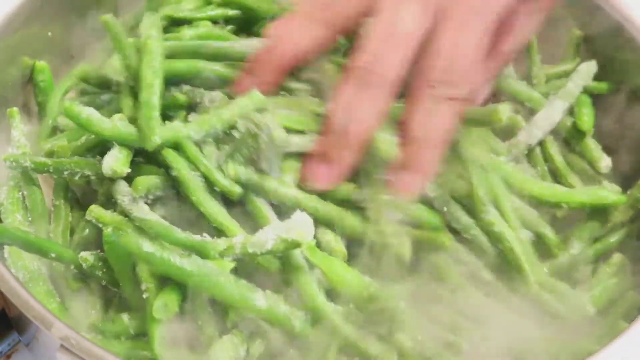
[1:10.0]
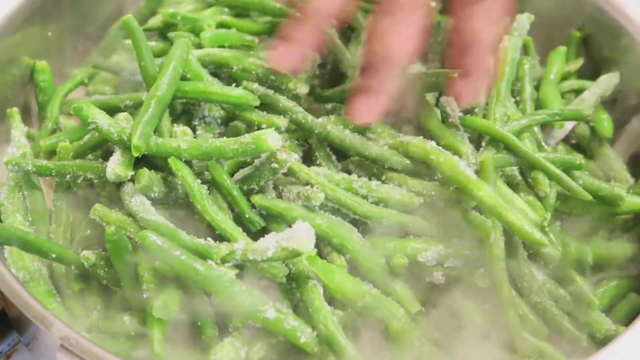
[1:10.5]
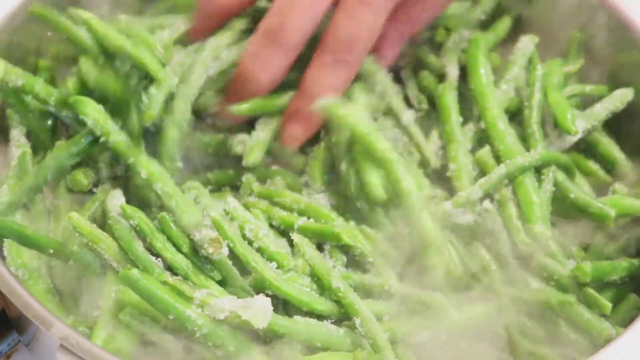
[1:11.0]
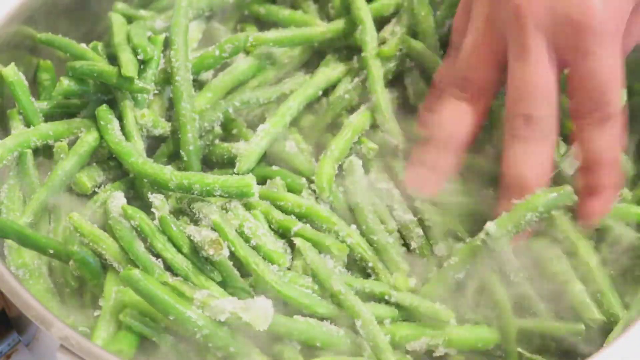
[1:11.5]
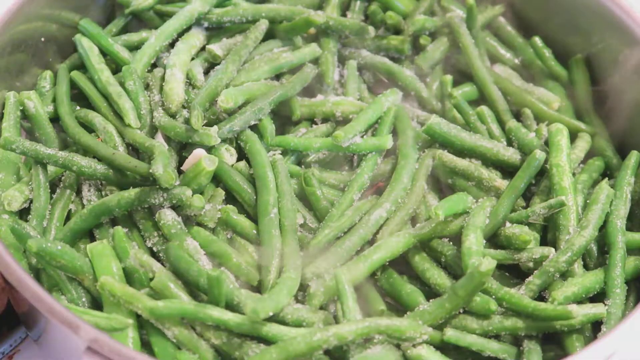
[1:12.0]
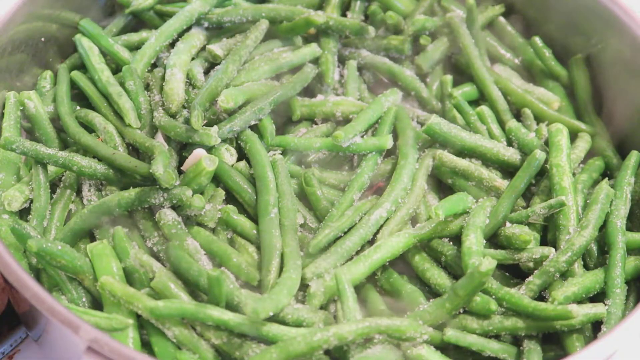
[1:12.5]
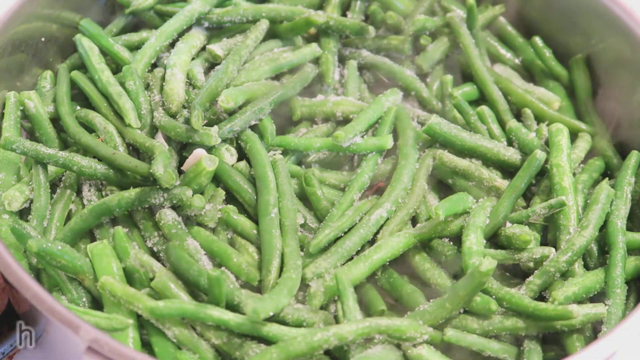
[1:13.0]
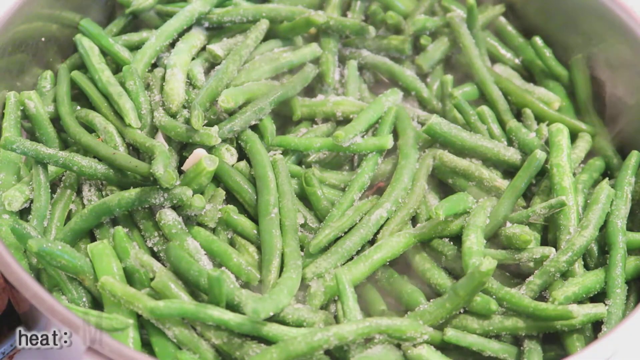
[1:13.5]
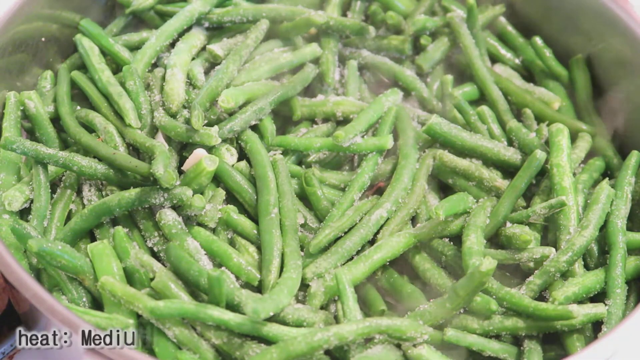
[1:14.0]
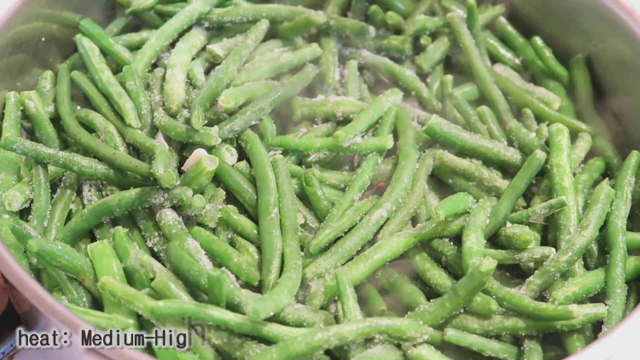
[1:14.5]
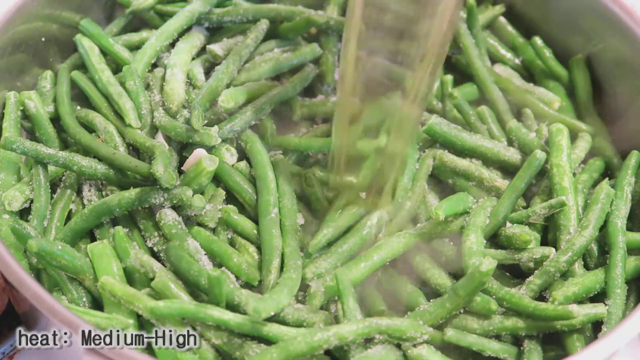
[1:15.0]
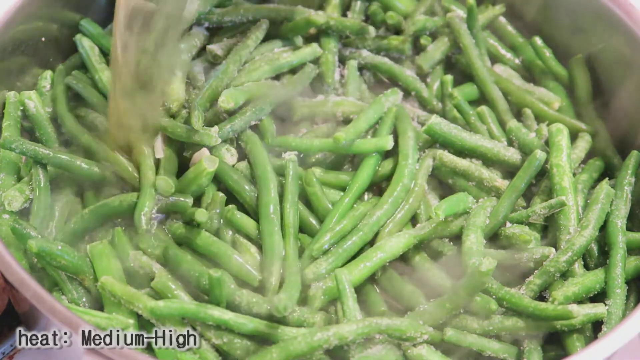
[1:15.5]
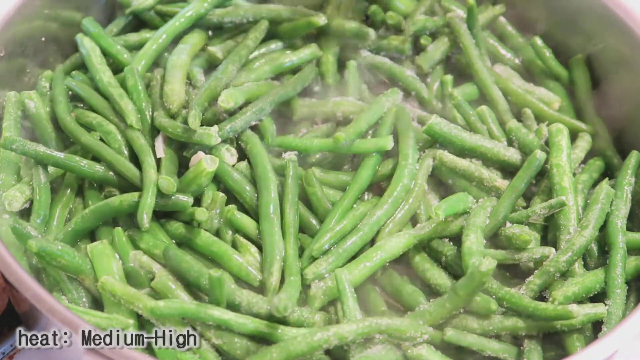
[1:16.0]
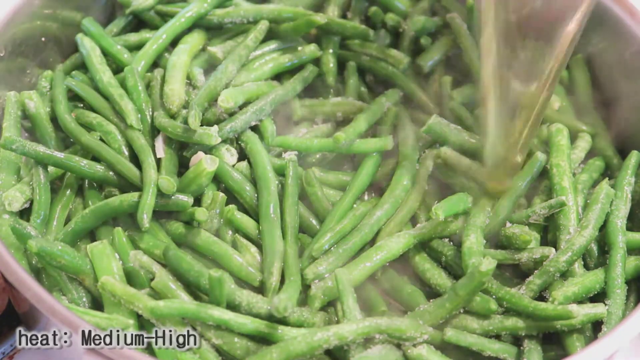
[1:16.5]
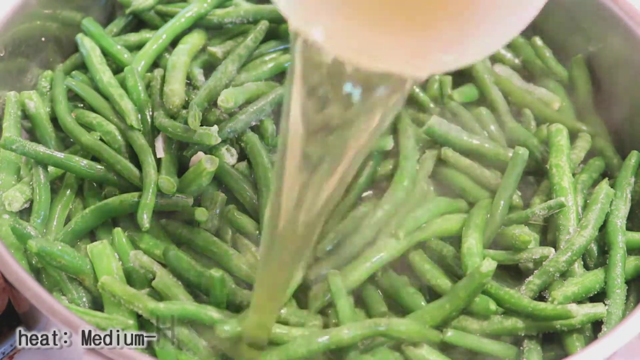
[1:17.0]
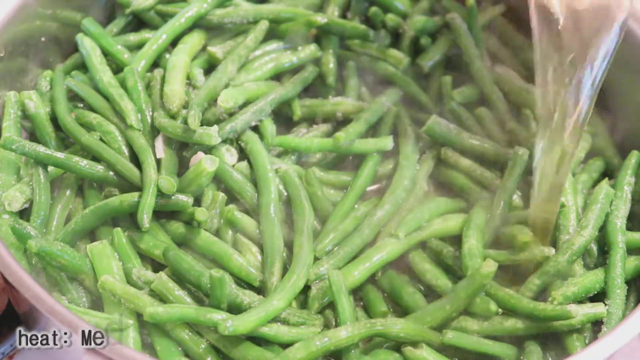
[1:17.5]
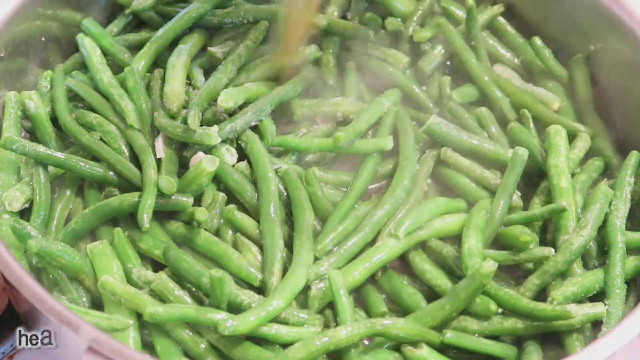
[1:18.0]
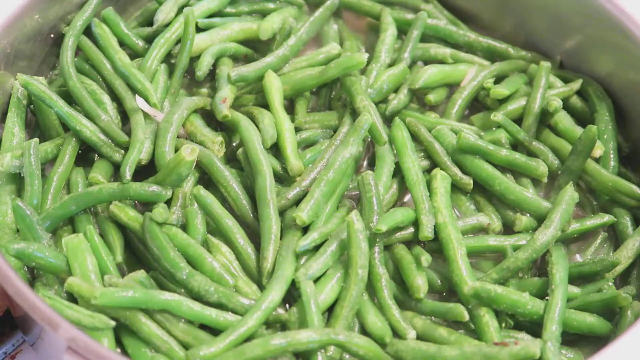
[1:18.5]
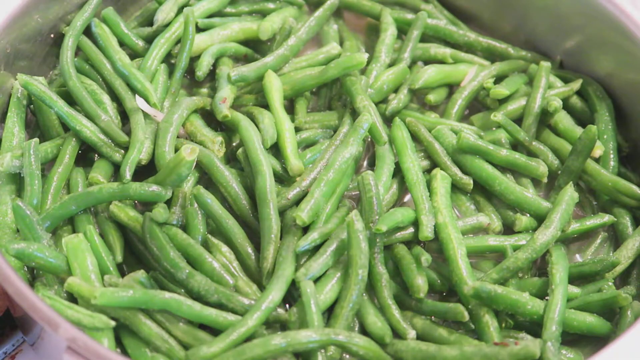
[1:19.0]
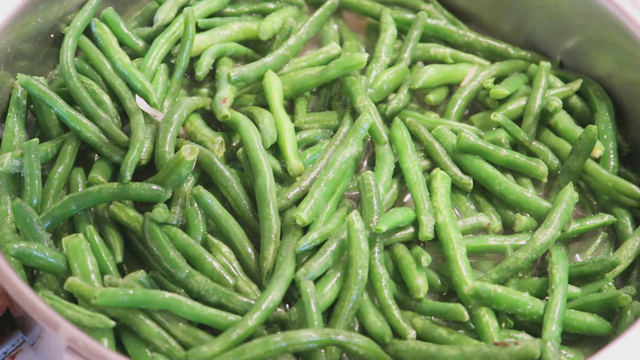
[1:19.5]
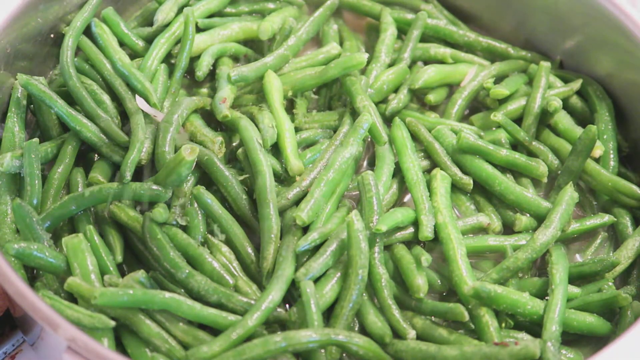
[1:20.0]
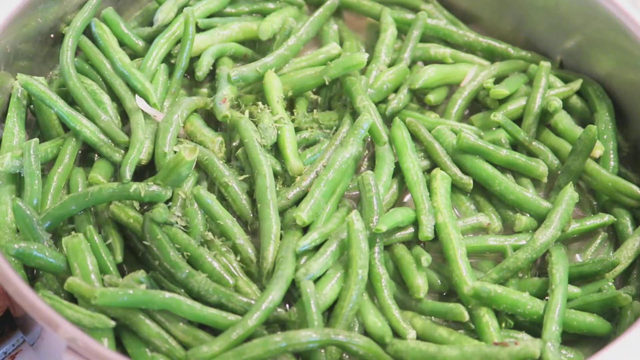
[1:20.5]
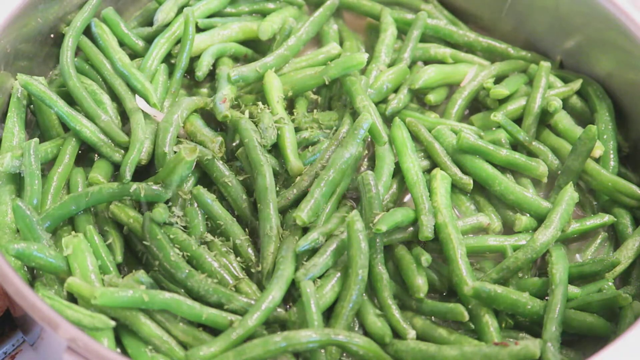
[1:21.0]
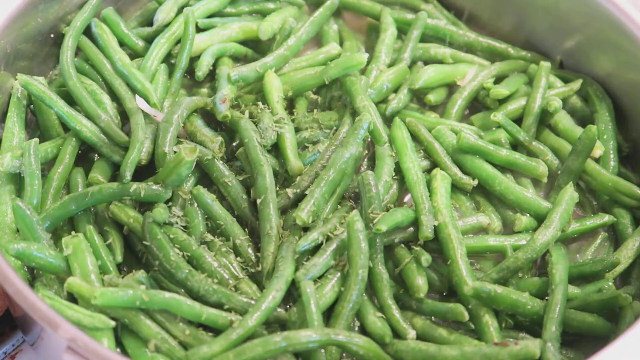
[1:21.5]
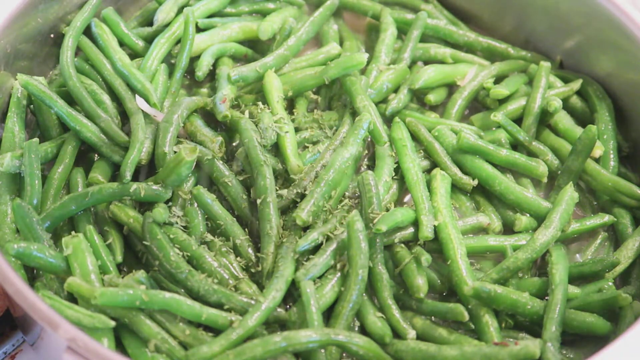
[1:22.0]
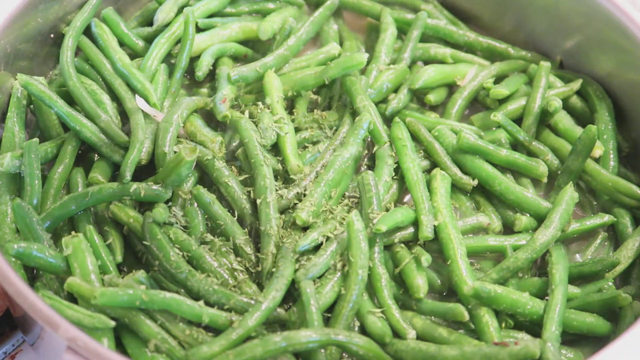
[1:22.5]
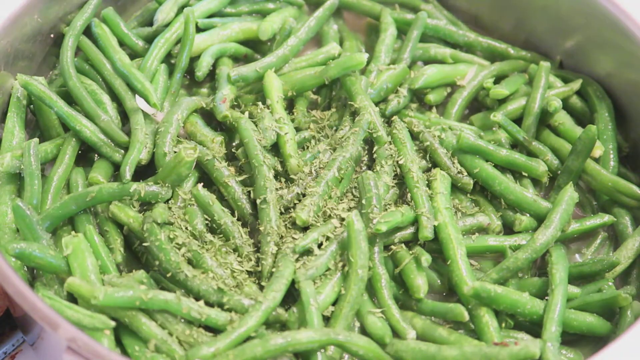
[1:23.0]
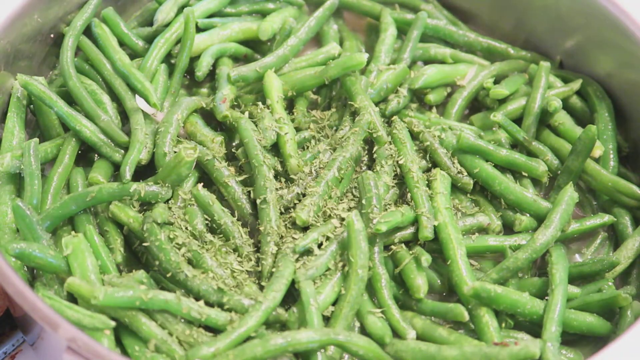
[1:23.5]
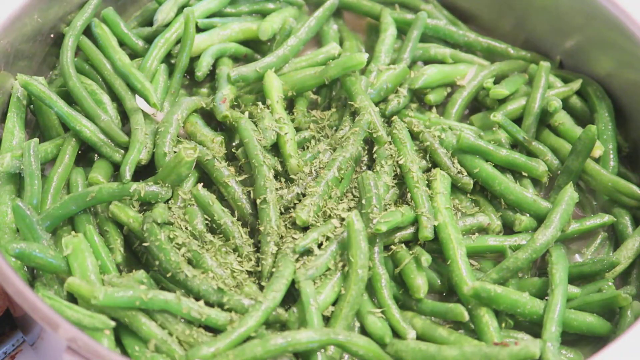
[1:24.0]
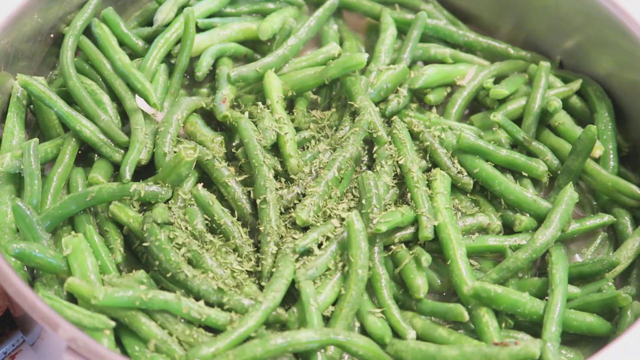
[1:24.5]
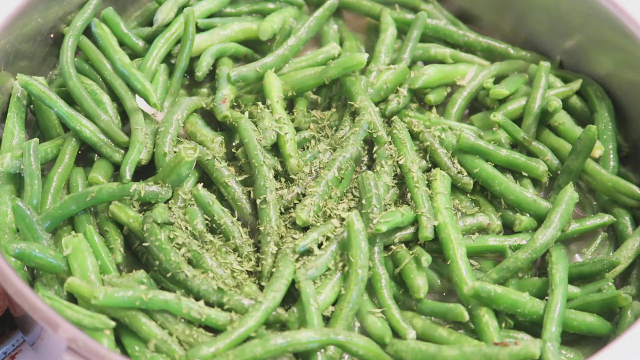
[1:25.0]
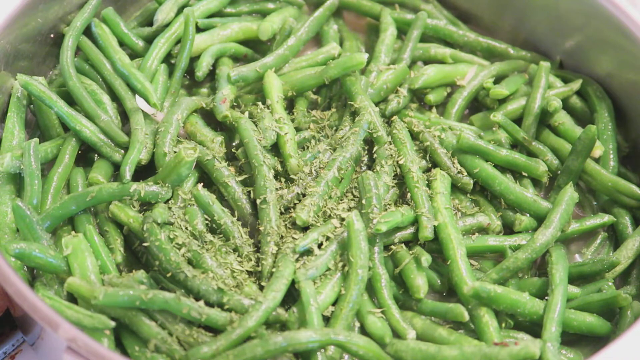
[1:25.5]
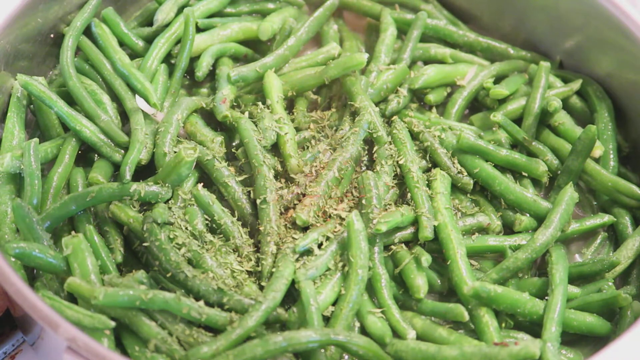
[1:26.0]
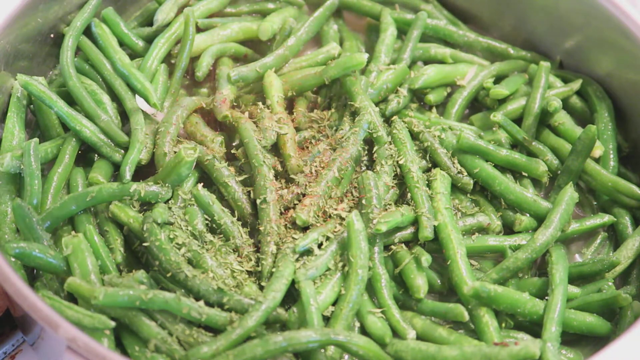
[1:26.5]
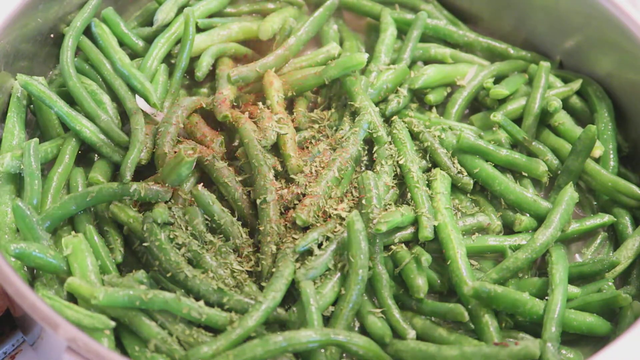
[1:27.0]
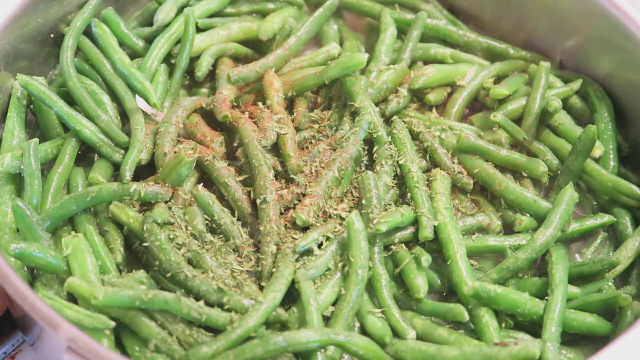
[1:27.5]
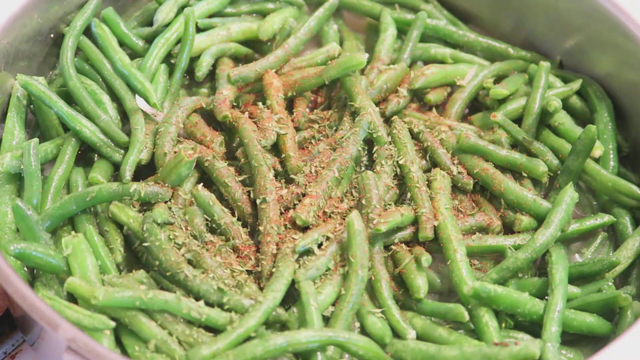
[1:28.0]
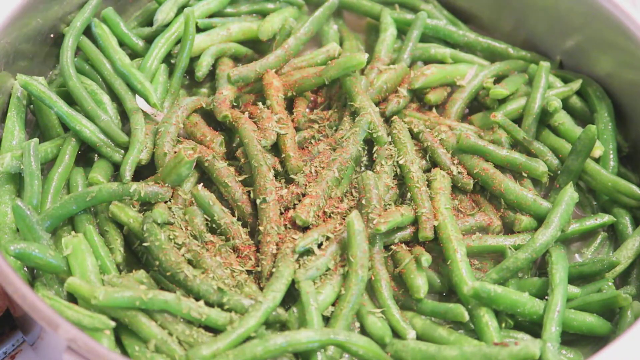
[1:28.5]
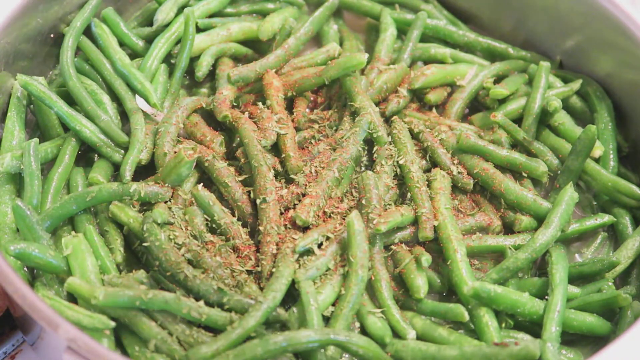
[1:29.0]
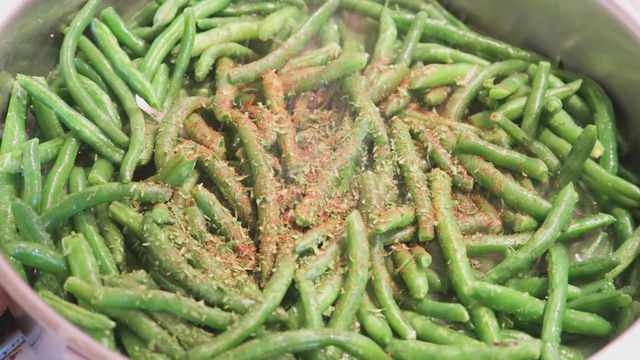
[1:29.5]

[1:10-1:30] Butter is put in a pan, garlic and onions are added and mixed, and then frozen green beans are added to the pan.